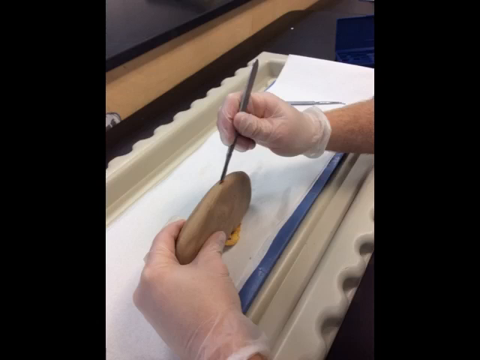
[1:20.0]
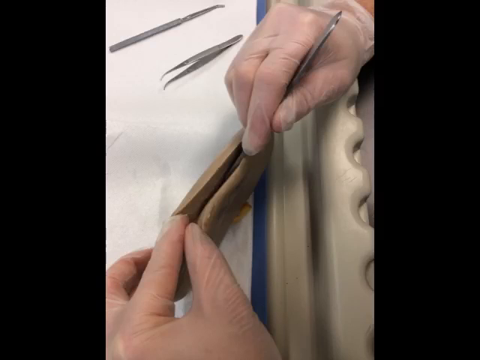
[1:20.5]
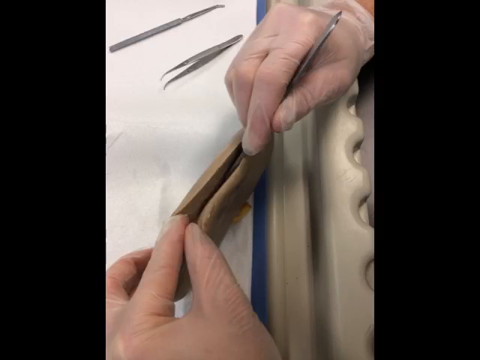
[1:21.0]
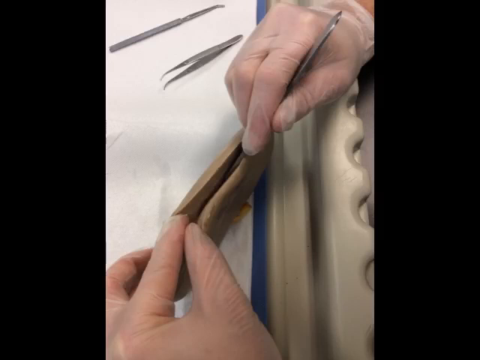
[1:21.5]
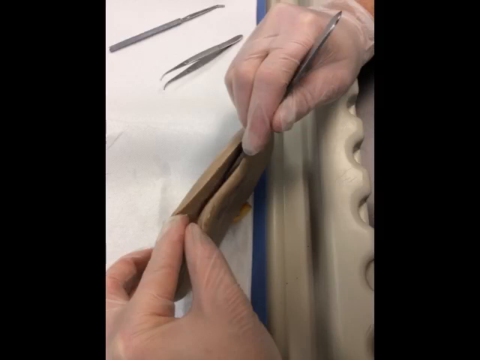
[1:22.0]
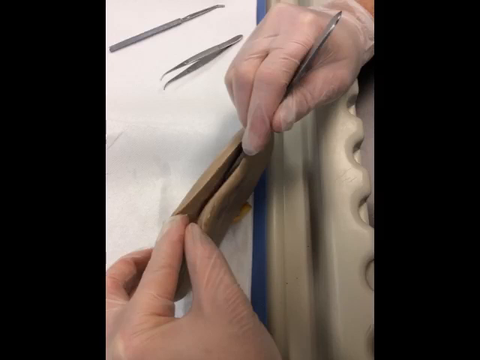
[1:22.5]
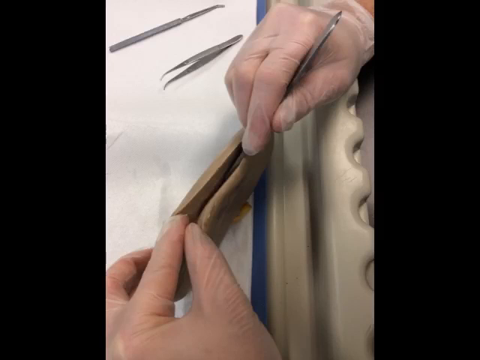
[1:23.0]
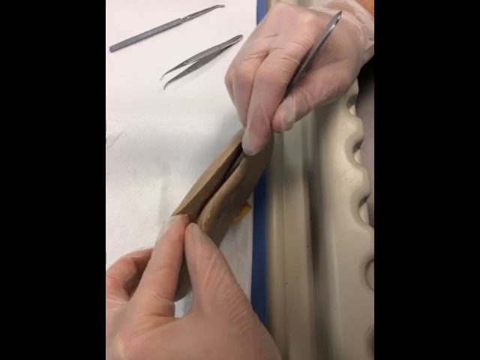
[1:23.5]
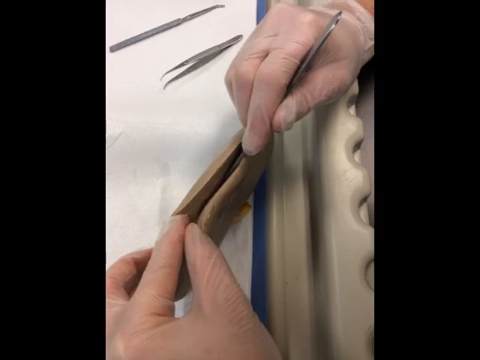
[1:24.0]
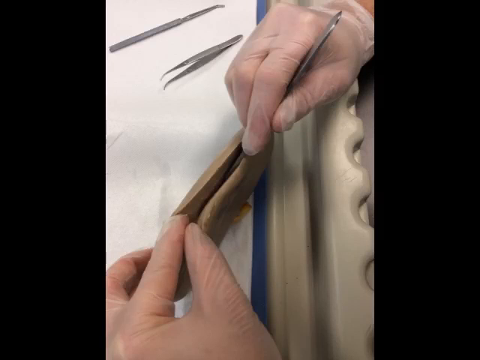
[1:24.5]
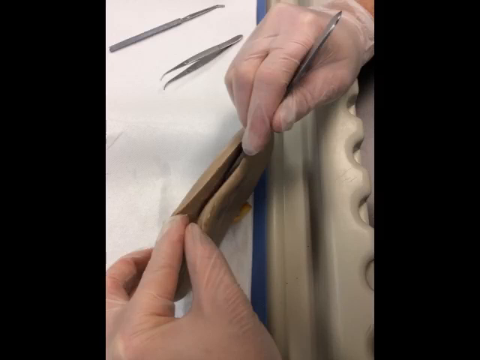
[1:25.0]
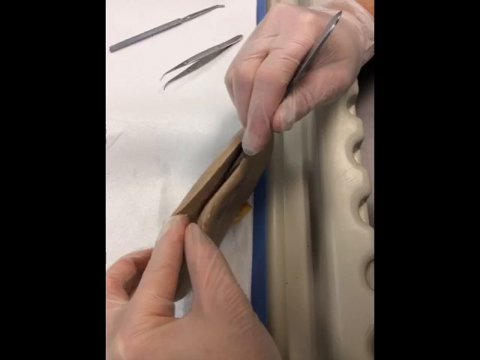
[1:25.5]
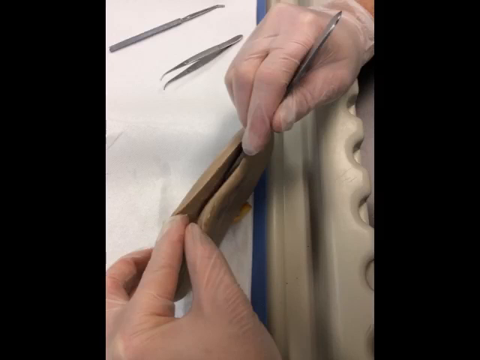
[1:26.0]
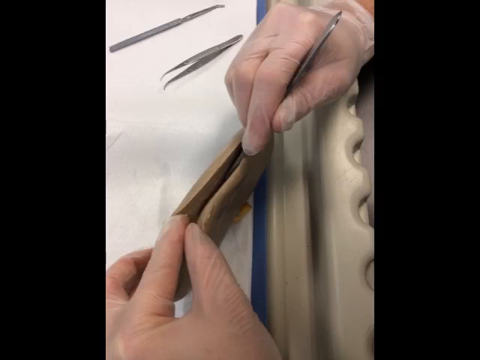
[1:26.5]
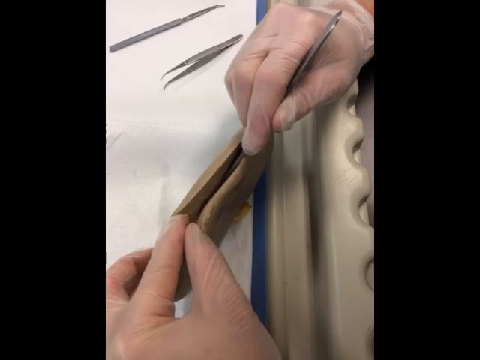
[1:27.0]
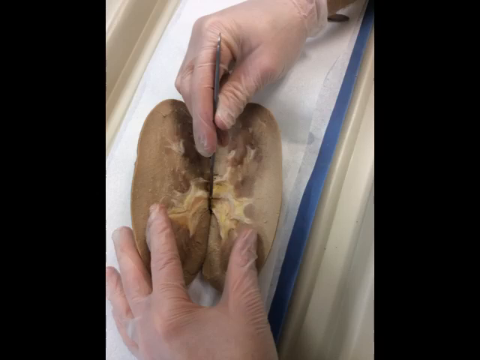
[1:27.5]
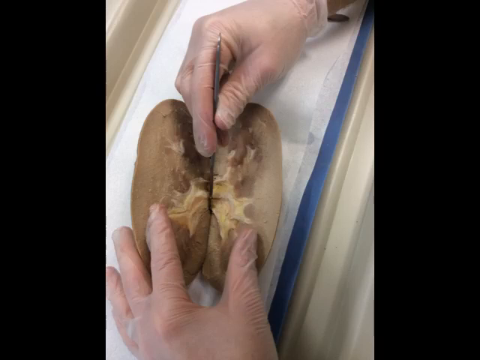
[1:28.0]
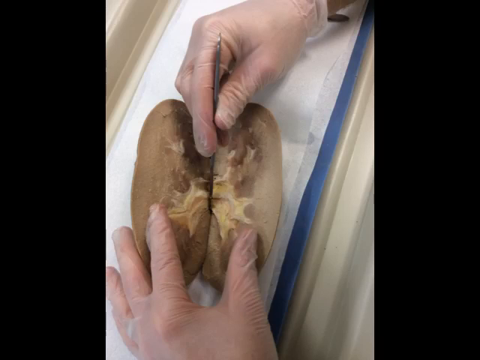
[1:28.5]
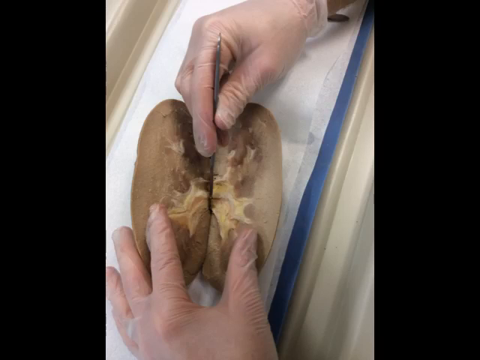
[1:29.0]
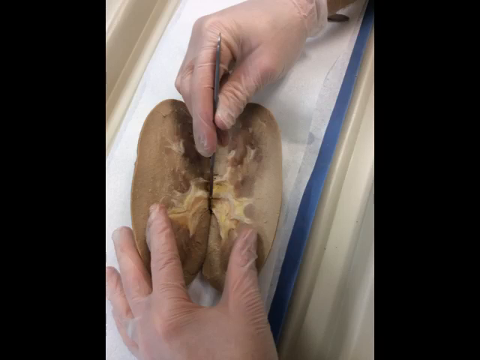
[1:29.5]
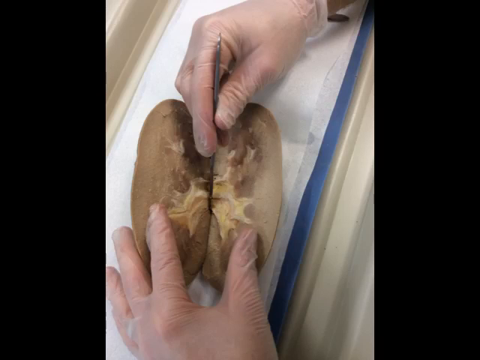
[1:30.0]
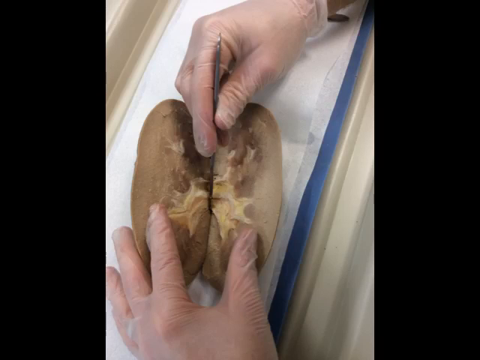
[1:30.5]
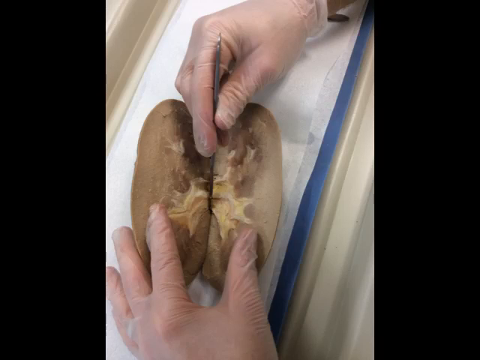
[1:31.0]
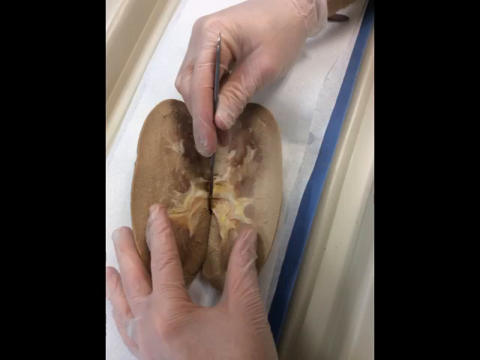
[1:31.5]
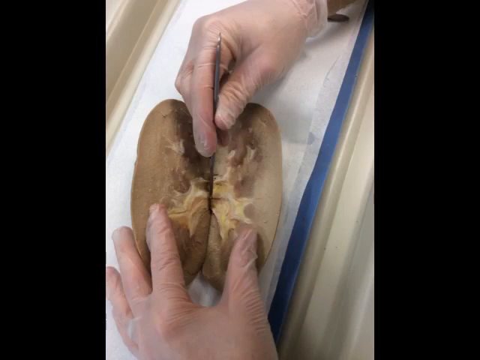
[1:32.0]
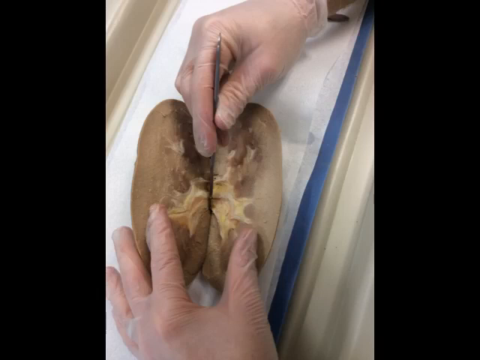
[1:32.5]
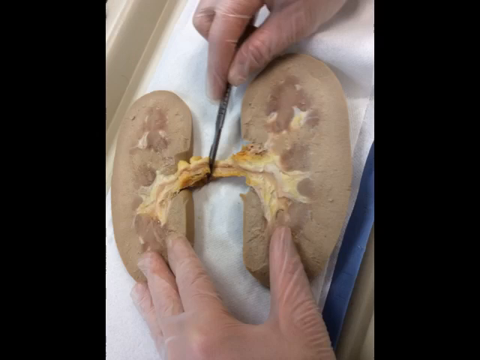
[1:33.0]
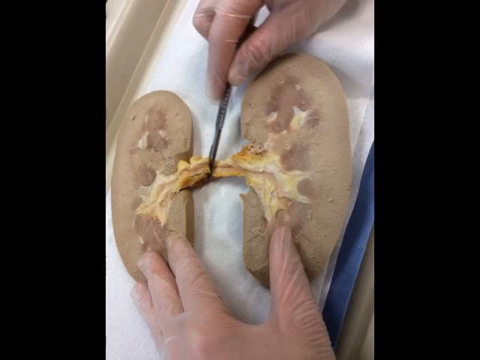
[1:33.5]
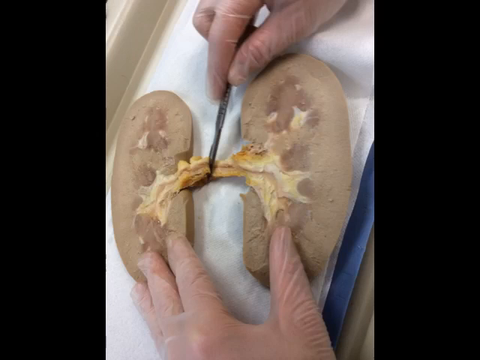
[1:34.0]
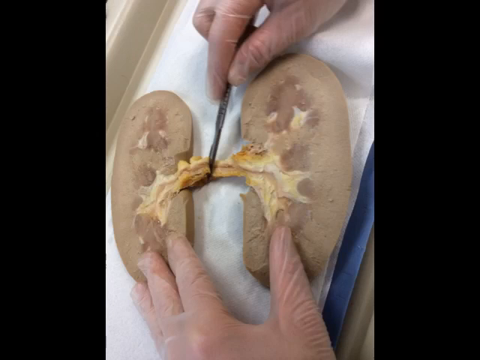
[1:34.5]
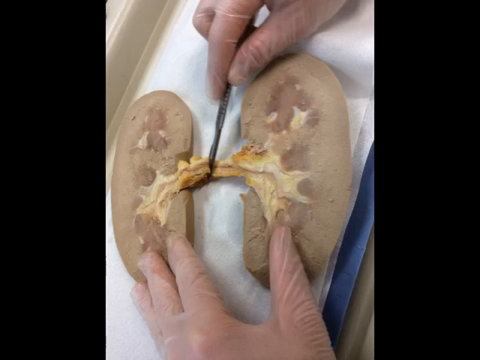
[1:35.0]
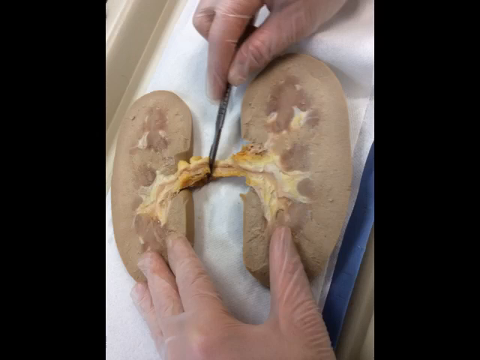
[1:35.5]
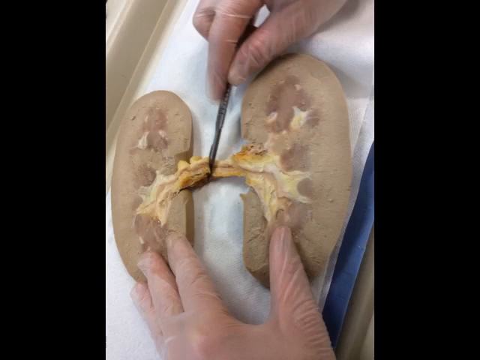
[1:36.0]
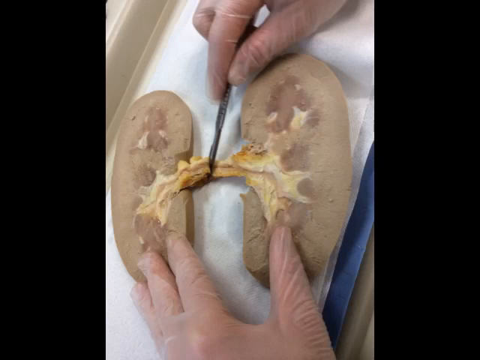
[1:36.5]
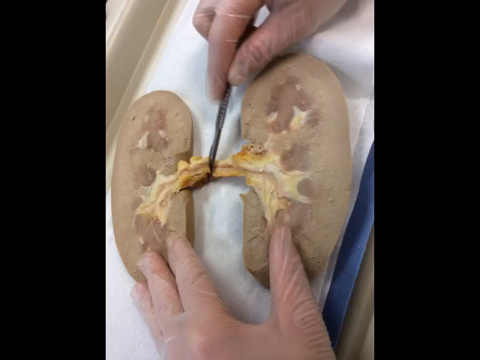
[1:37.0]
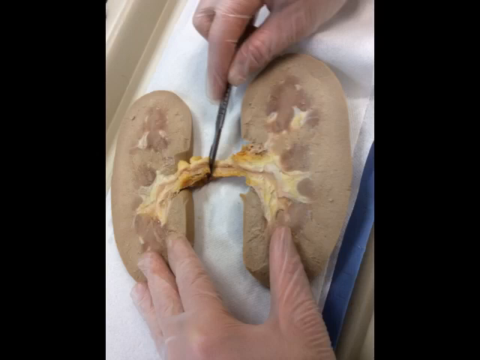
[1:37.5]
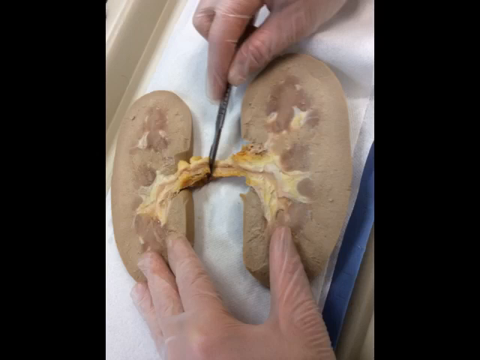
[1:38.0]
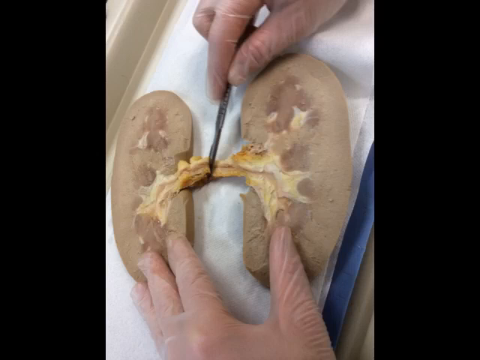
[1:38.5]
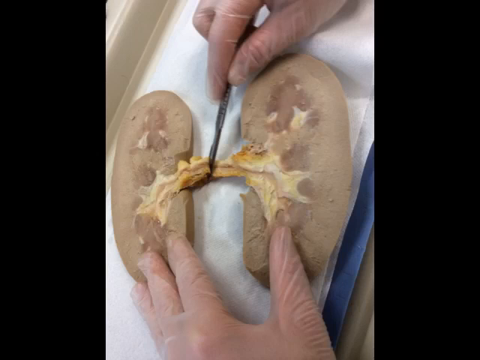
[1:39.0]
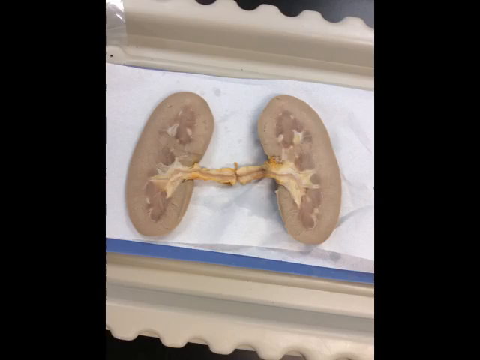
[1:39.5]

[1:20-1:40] A person holds a human kidney with the left hand, standing it up on its side and resting it on a tabletop. The right hand holds a scalpel whose edge points down at the top edge of the kidney. In the next image, the scalpel has sliced down the center of the kidney; the left hand holds the kidney and kind of spreads the cut area while the right hand slices down into it with the scalpel. In the last image, the kidney has been cut completely in half down the very center, and the two halves lie on the table, one on the right and one on the left.